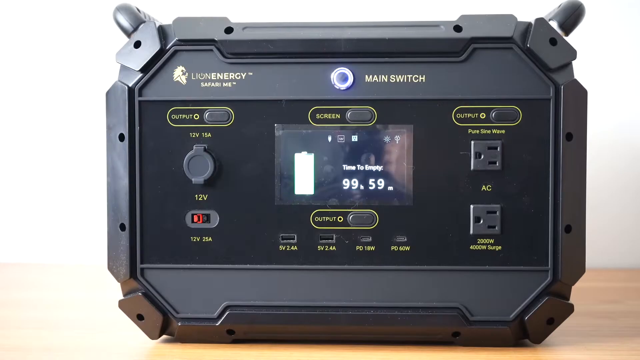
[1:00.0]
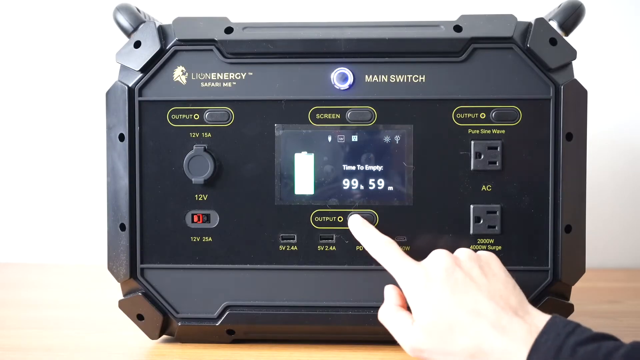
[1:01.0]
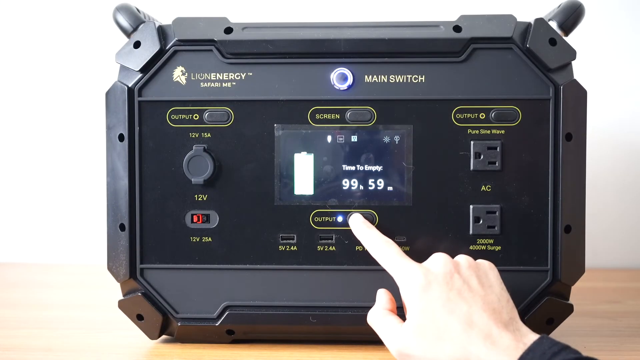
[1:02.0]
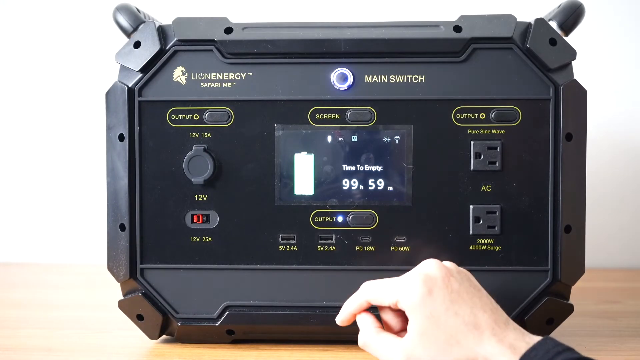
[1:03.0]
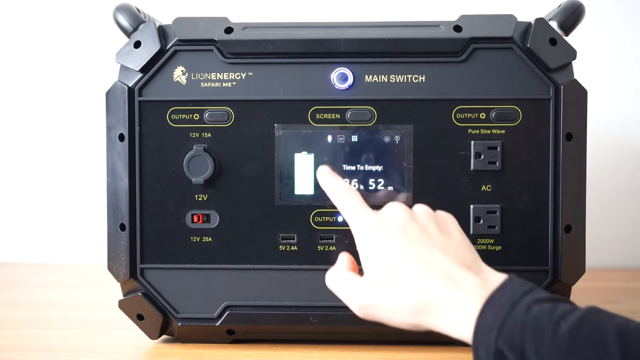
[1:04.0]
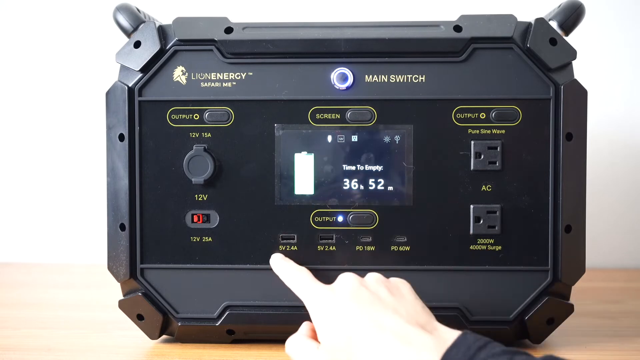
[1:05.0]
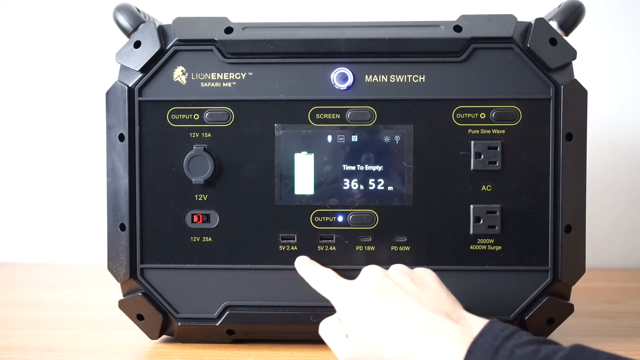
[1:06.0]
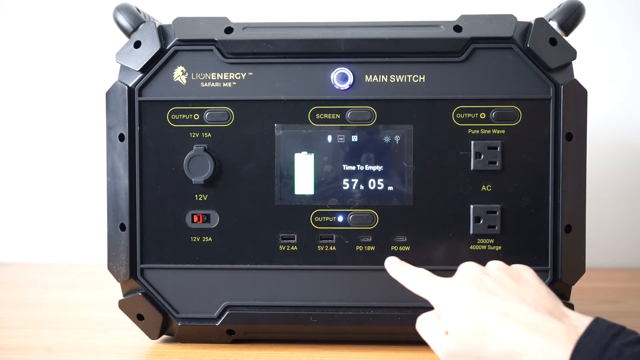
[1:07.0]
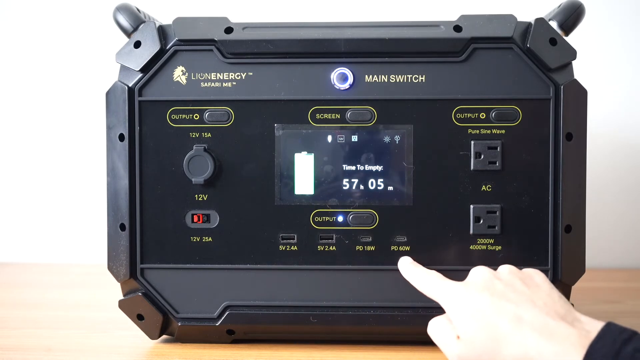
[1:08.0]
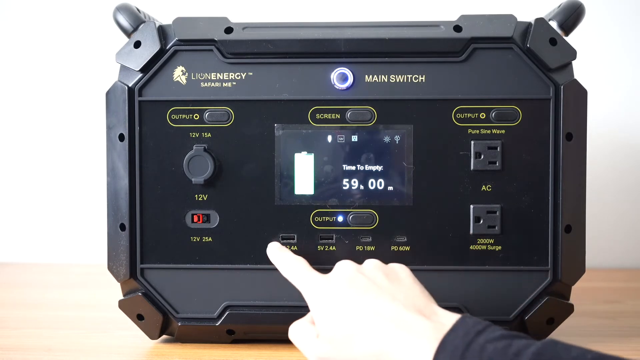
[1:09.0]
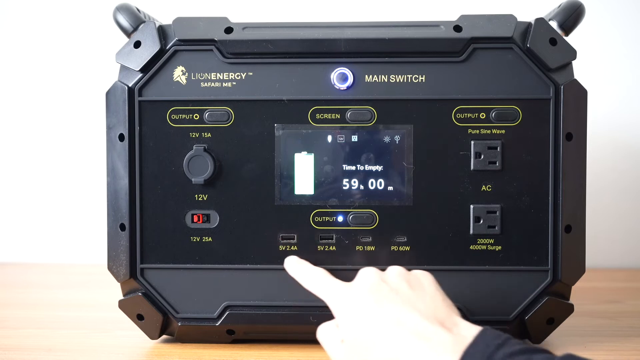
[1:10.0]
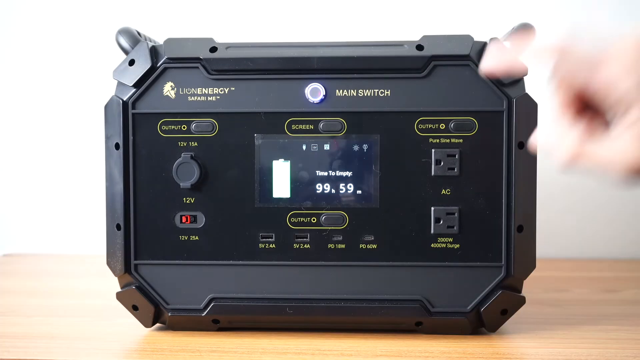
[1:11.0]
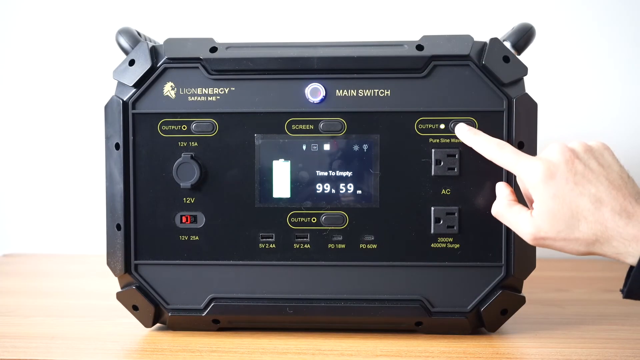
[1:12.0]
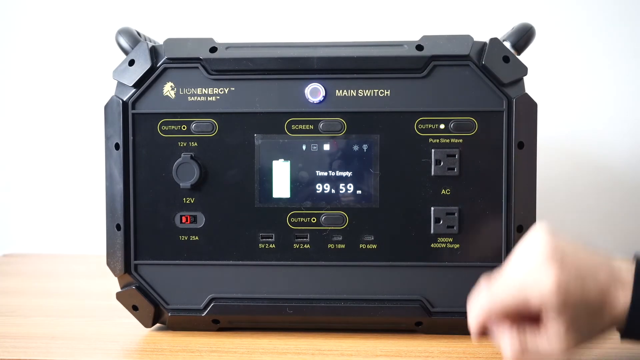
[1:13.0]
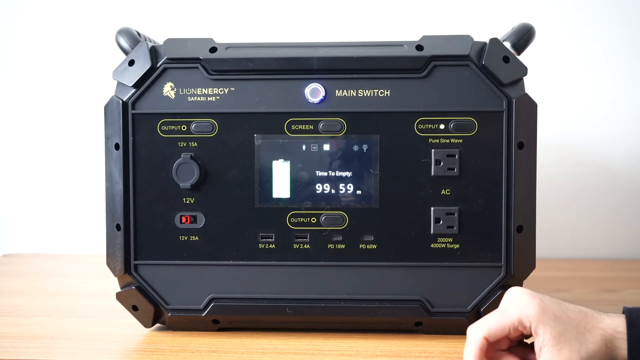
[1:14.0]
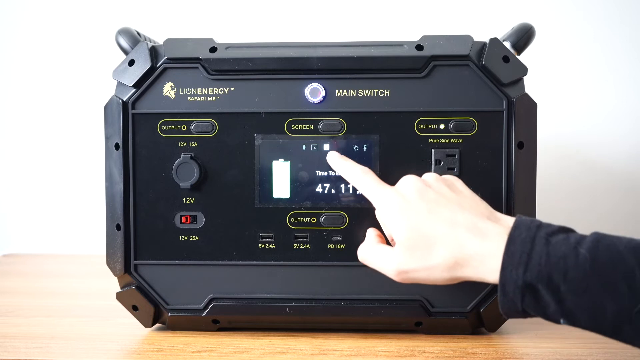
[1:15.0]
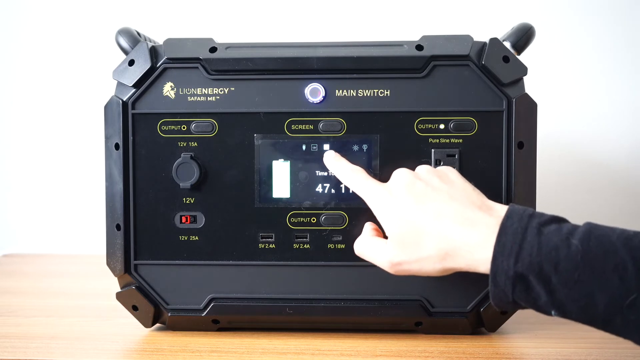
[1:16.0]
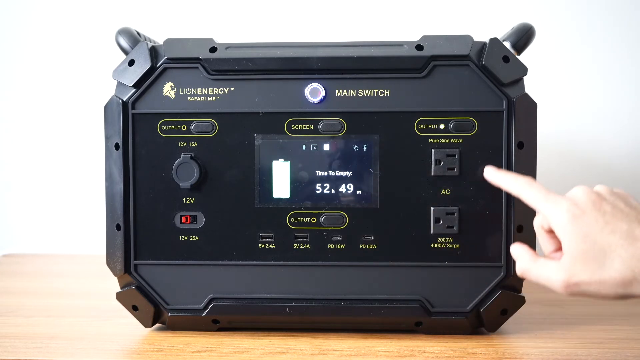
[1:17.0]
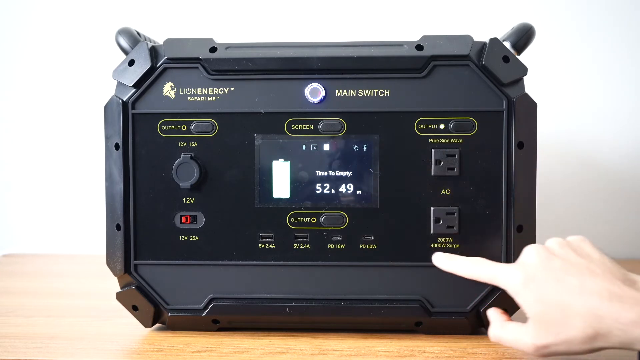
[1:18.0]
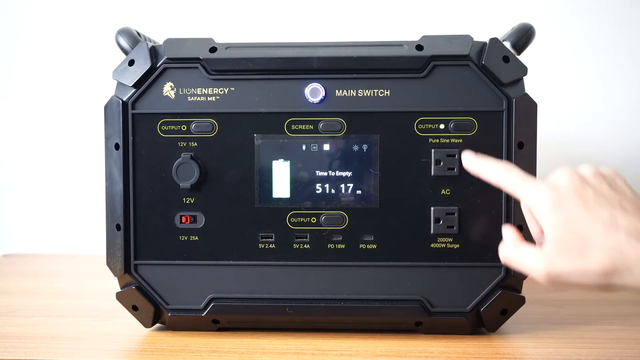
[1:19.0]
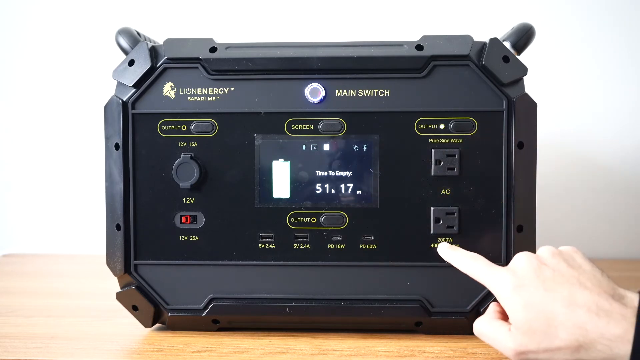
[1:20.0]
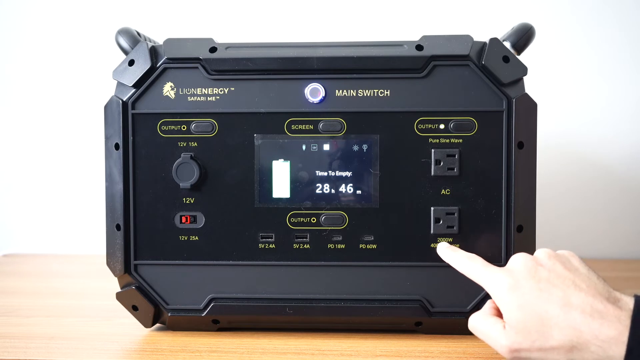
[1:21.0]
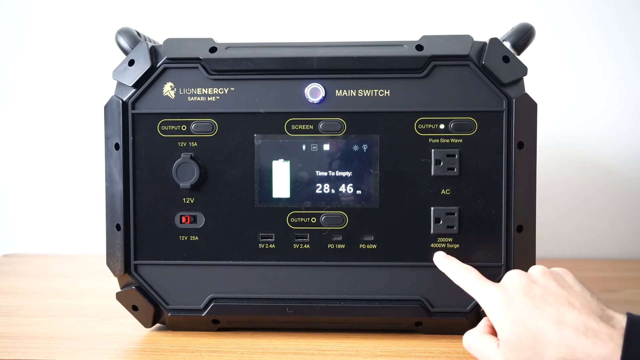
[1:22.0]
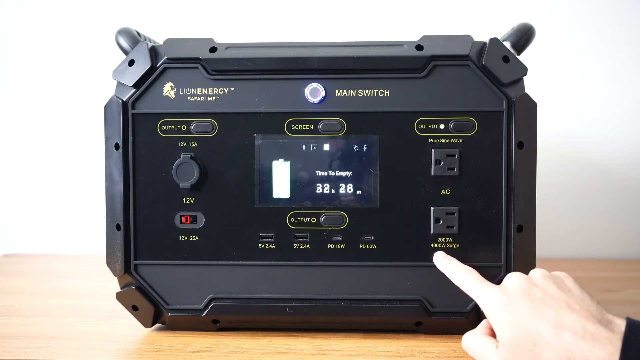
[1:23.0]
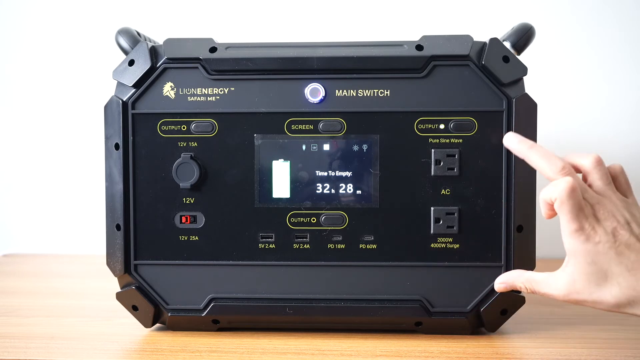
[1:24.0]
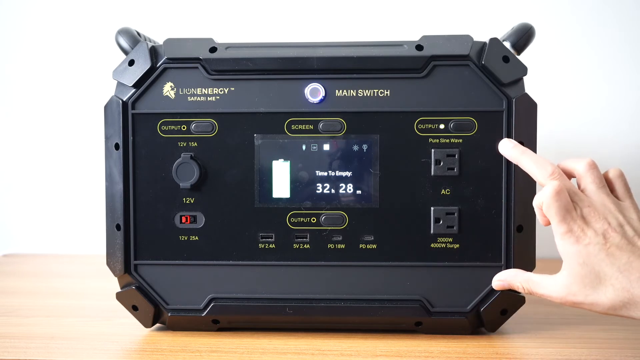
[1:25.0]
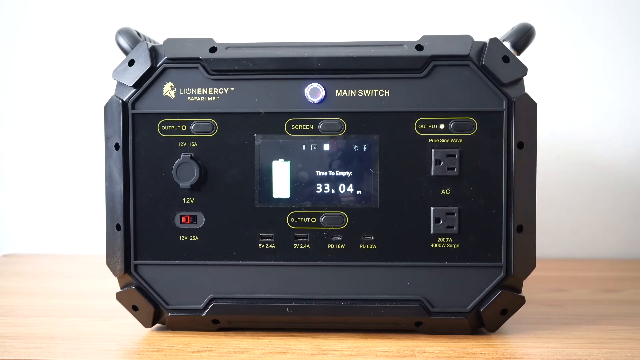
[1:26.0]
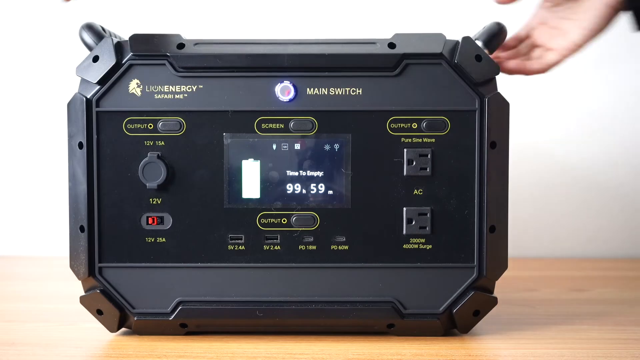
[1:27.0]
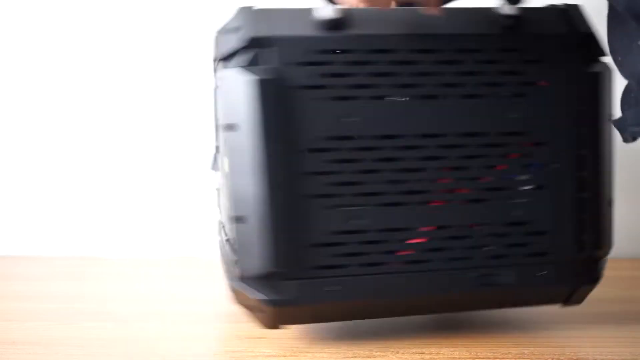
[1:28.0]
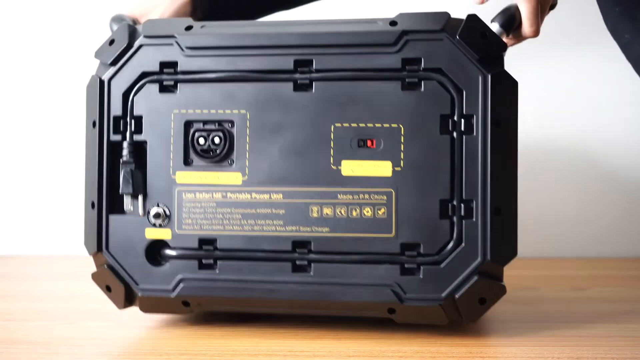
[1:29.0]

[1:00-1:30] A device has text that says "Lion Energy Safari Me" with a little lion at the top left. Its main switch button lights up. There are three output buttons, one on the top left, one on the top right, and one at the bottom center, with a screen in the center showing a battery and "time to empty, 99 hours, 59 minutes," plus some other buttons on the device. A man's finger comes in and presses the output button at the bottom center, which lights up, and he points to some of the icons on the screen and the battery. He comes down to the little USB sections, roughly runs his finger across them, and circles around two of them. He then focuses on the top right of the device and presses that output button in as well; the screen changes and he shows the icon, which is like a little white box. He circles around the AC and the 2000-watt, 4000 surge section and points at the 2000-watt section.